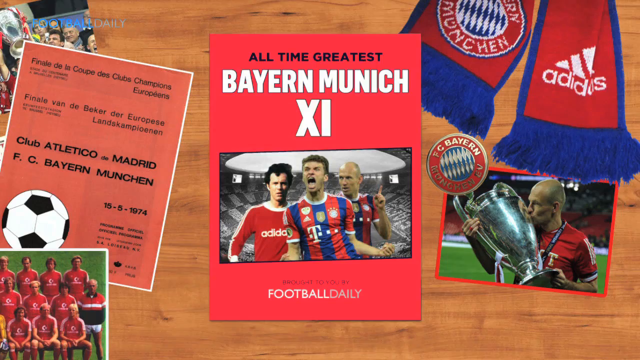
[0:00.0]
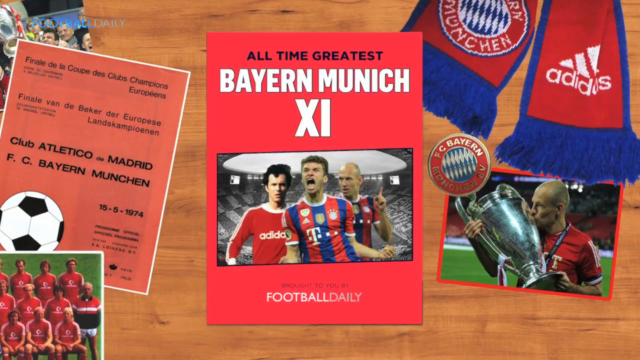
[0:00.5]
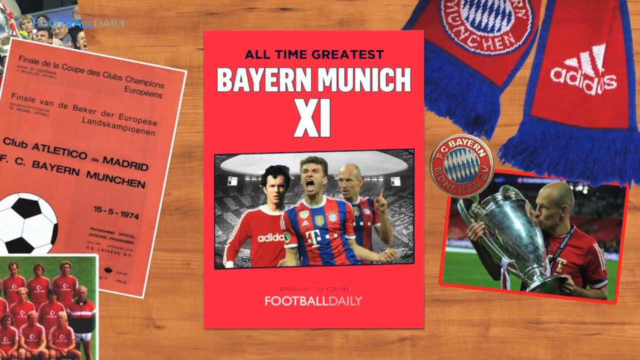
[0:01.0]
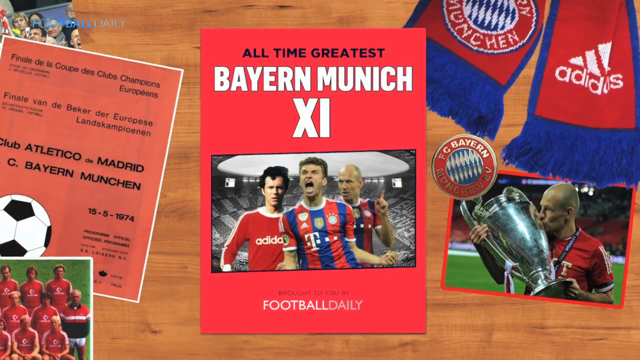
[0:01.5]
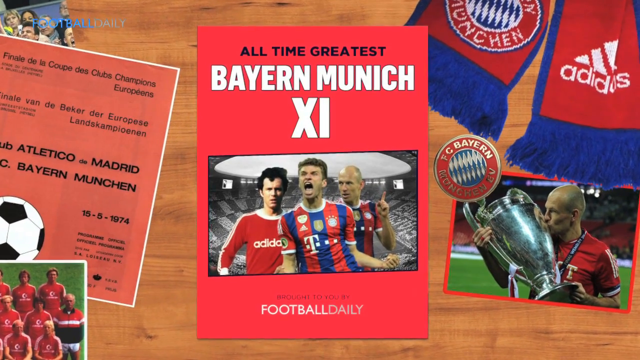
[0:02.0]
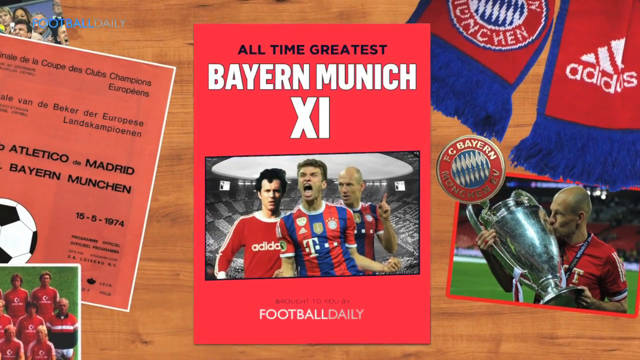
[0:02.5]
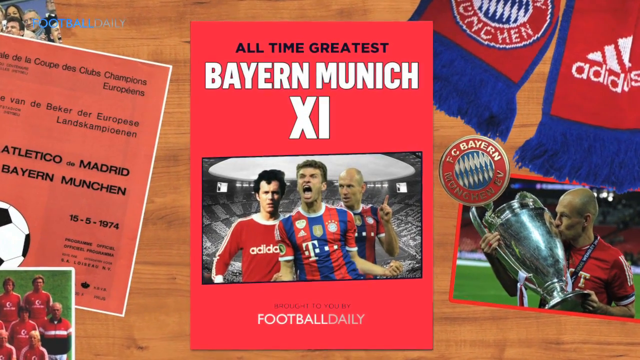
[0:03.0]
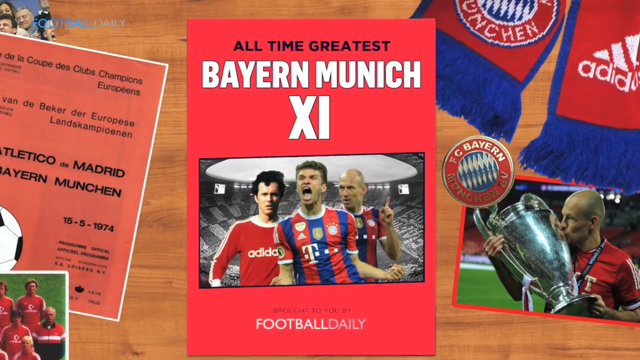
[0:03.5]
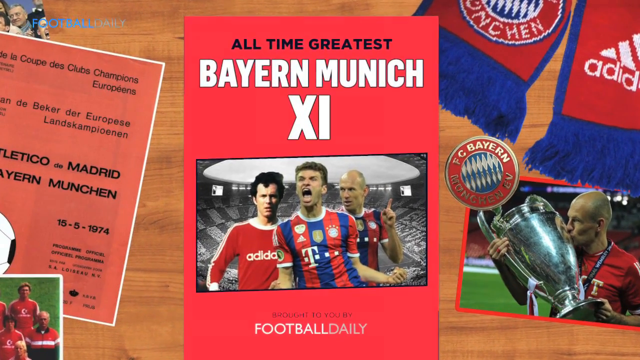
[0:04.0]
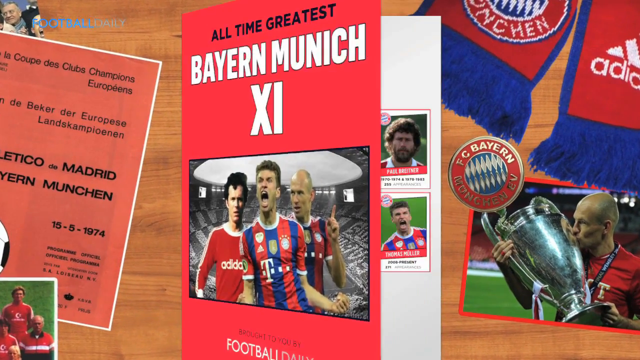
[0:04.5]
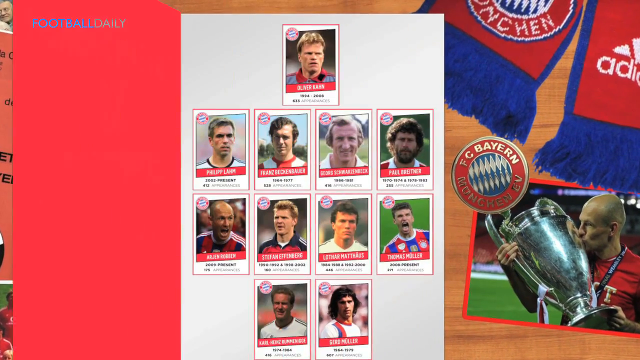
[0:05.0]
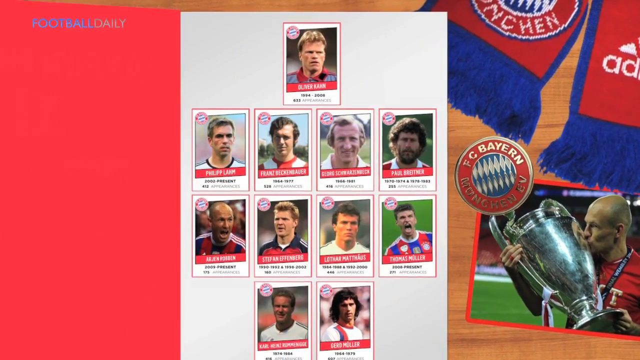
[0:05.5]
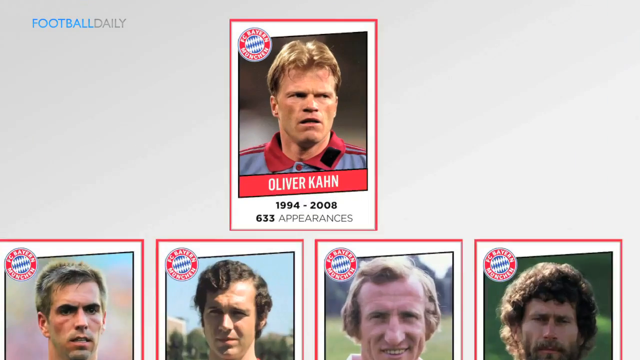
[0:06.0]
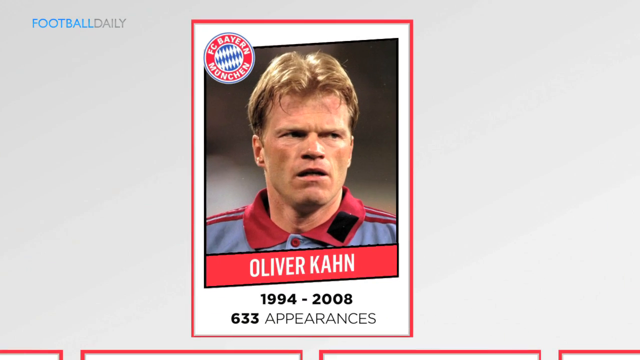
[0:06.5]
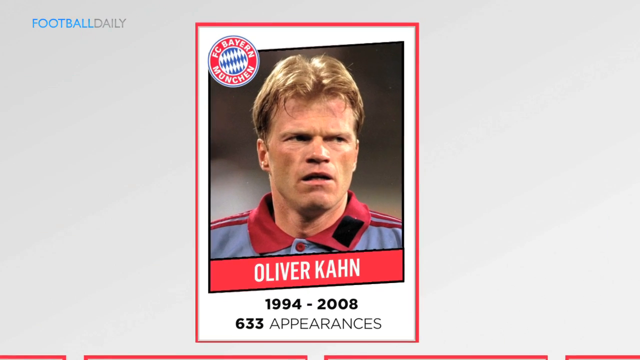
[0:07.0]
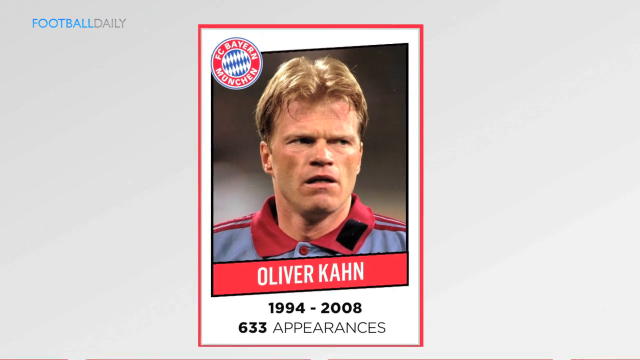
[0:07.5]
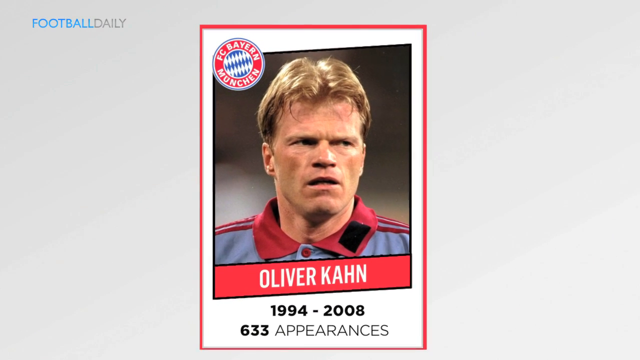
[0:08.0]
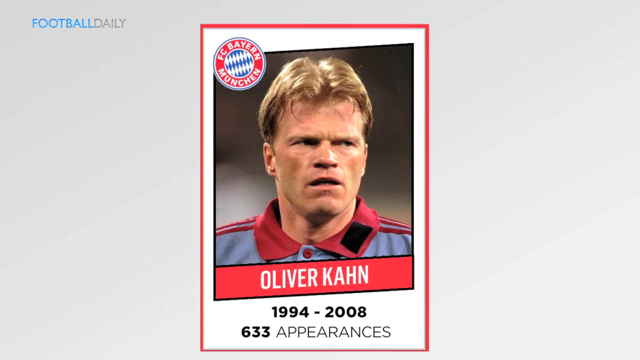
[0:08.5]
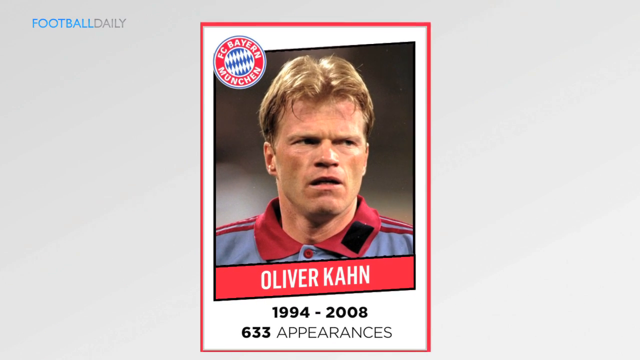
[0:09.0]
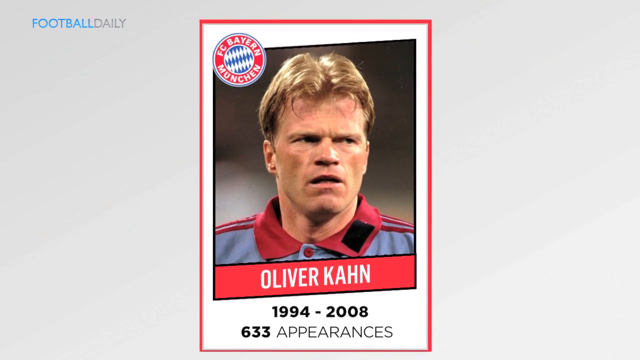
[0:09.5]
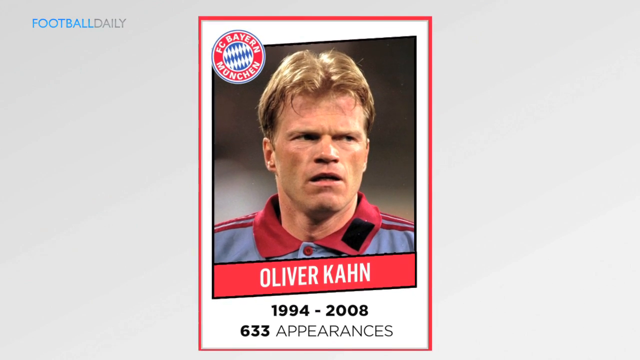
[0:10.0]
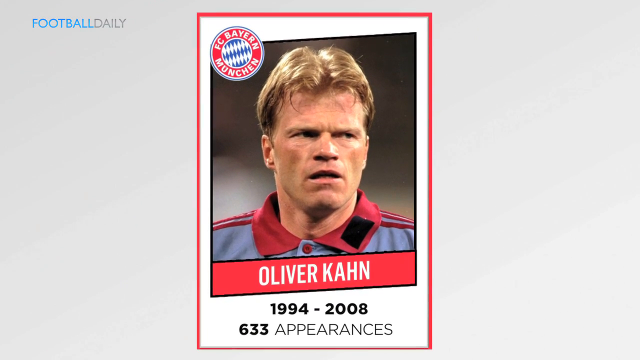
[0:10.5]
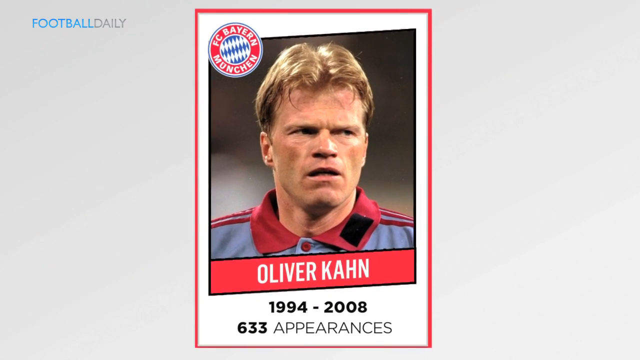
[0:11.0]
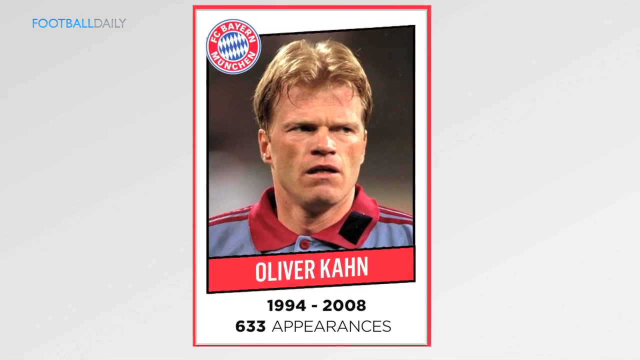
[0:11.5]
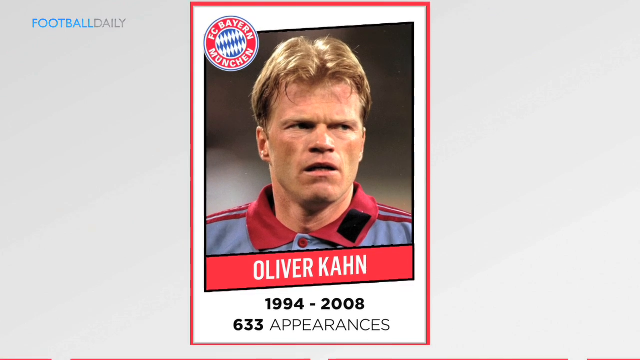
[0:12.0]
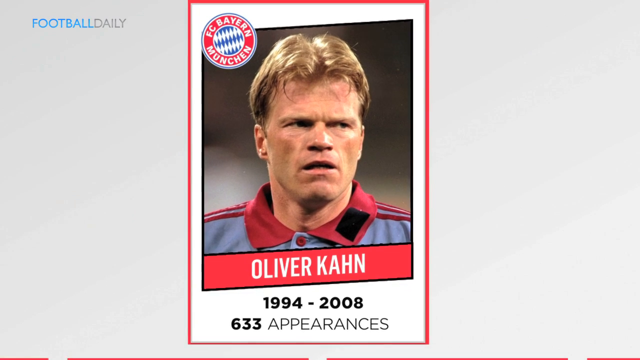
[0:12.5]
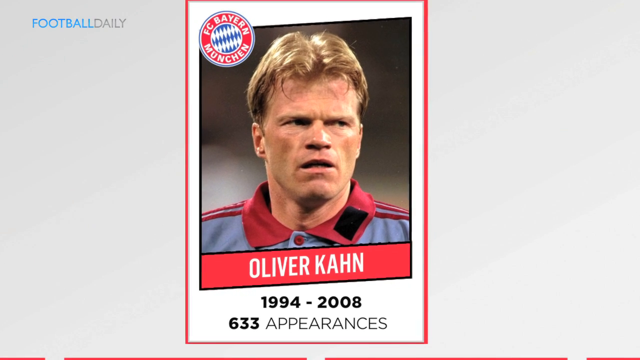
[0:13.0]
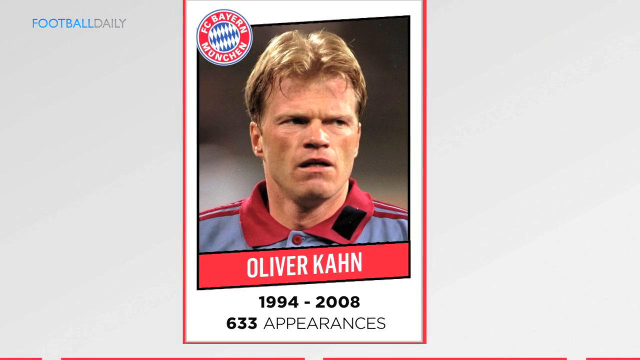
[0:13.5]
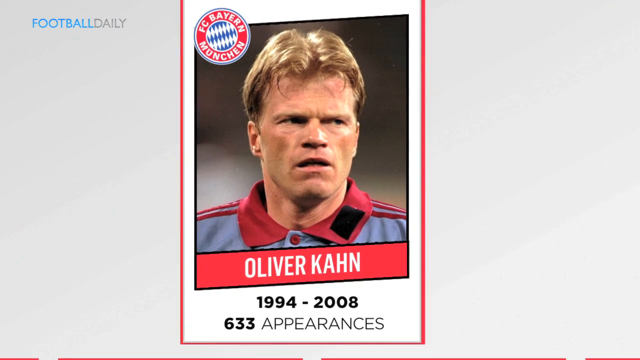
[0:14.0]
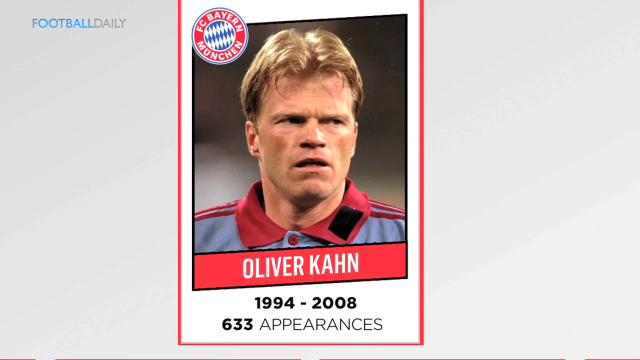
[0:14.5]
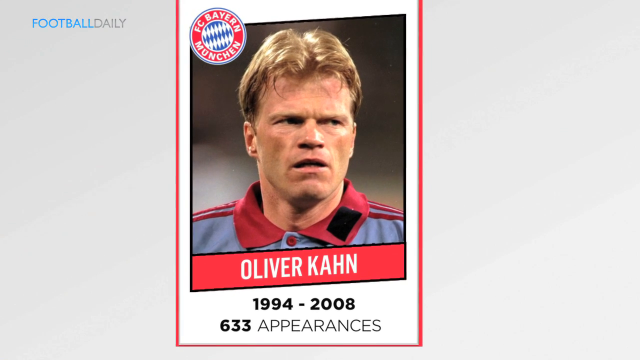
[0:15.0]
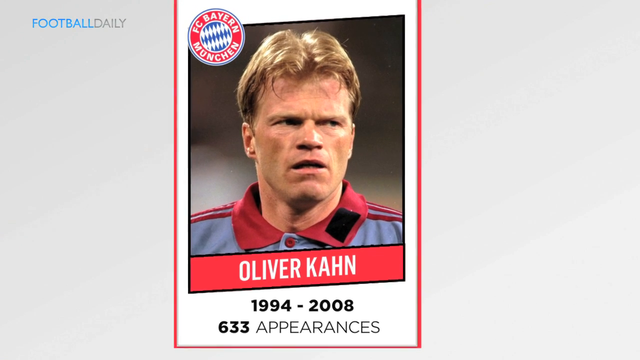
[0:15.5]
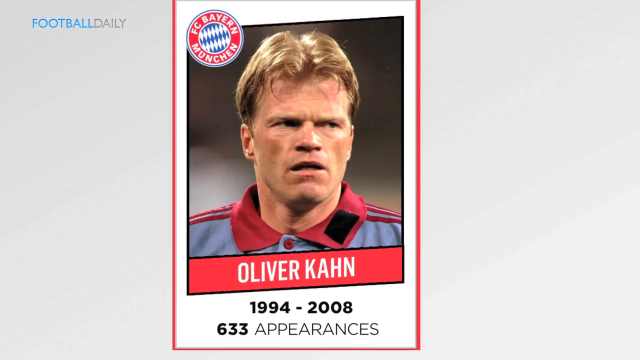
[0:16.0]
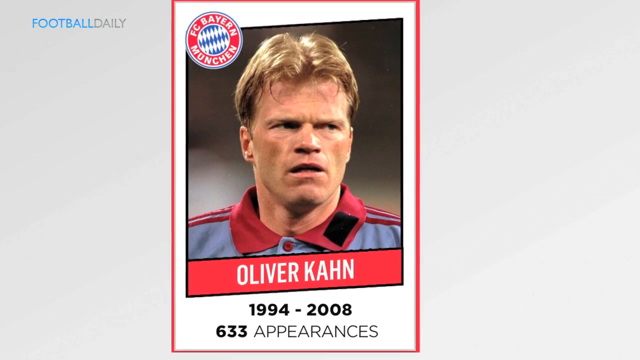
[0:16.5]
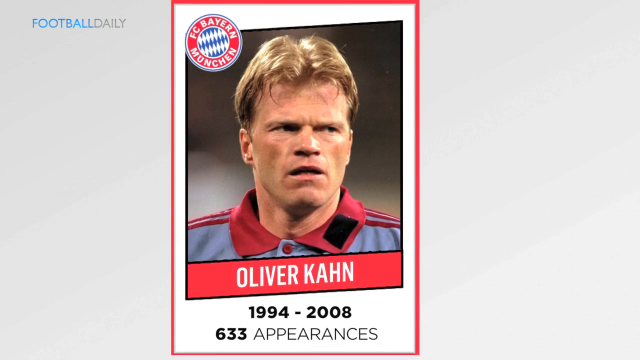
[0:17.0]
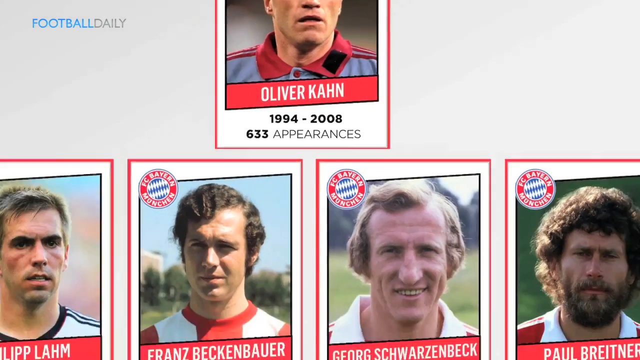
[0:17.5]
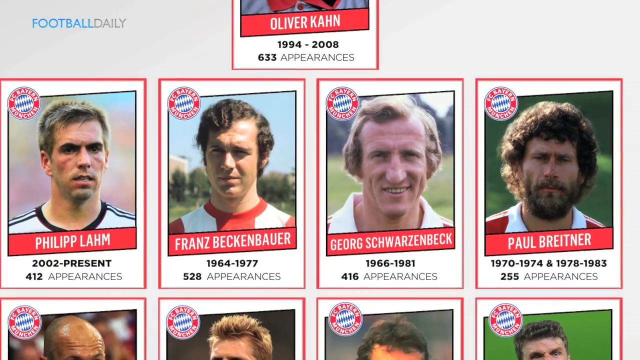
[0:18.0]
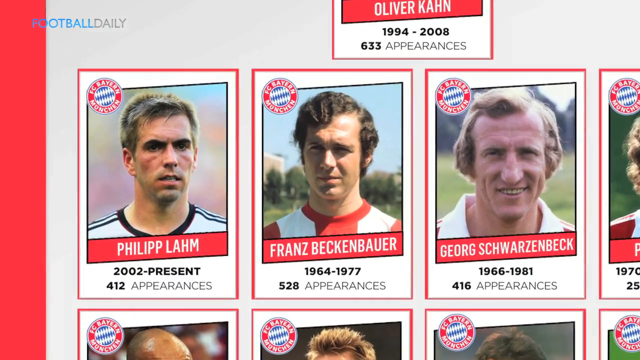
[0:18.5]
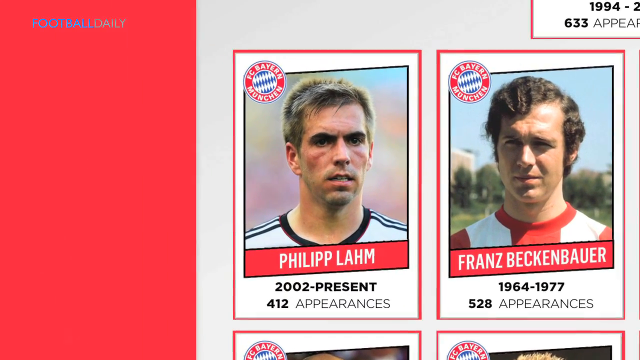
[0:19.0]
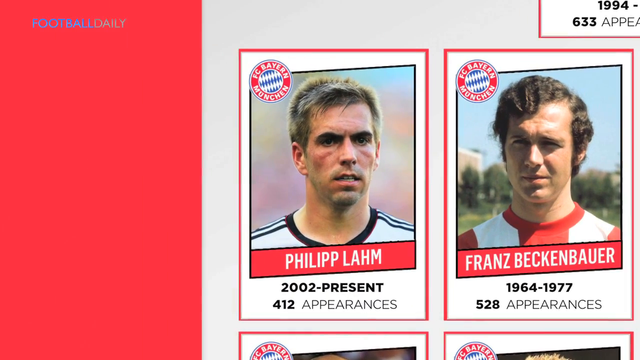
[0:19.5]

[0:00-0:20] The video opens on a set of images. In the upper right corner is a blue and red Adidas scarf, and beneath it an athlete in a mostly red jersey kisses a trophy; his right arm is wrapped around it with the hand holding the handle, and his left hand holds the base. A flyer reads "all-time the greatest" and also shows "BAYERN" and "X1", apparently 11 in Roman numerals. A soccer ball is on the left side. In the upper left corner, "football" appears in blue and "Daily" in gray. A player card reads "Oliver KAHN", "FC BAYERN" and, beneath that, "BUNCHEN", with "1994-2008" and "633 appearances". He wears a burgundy collar with what looks like a black triangle on it, on the right side as seen on screen. Another player shown is Philipp LAHM.